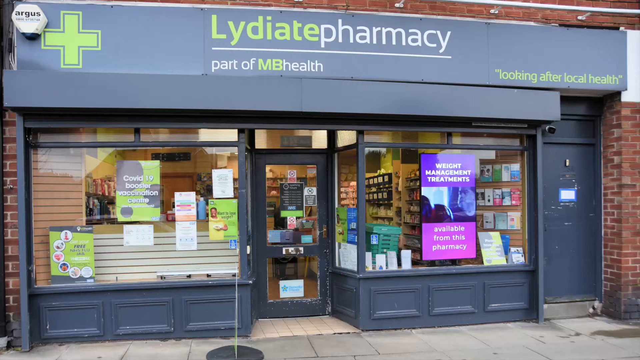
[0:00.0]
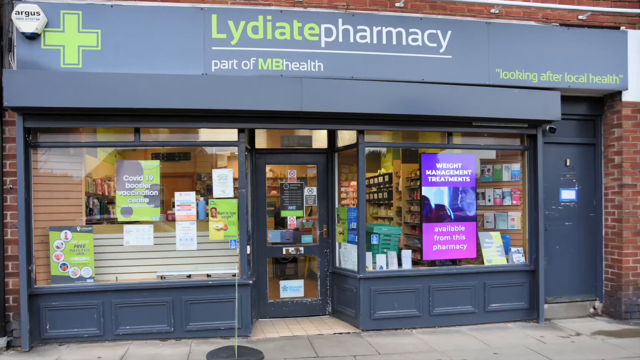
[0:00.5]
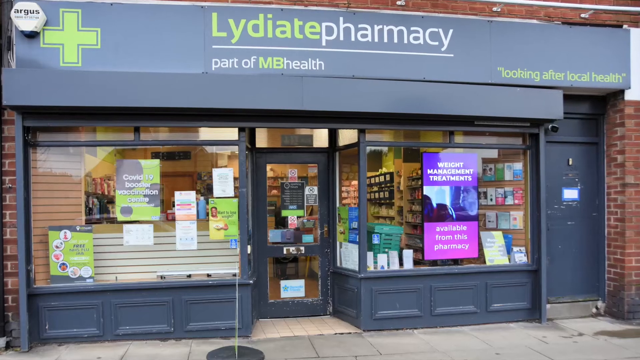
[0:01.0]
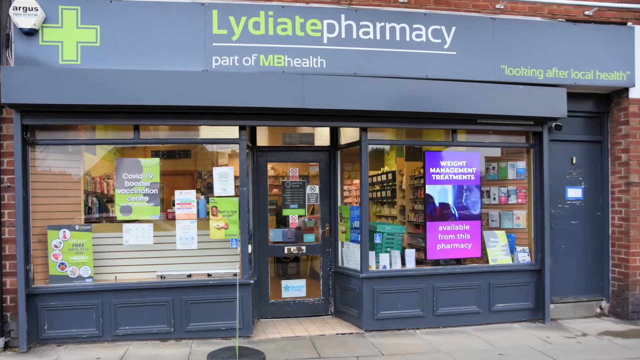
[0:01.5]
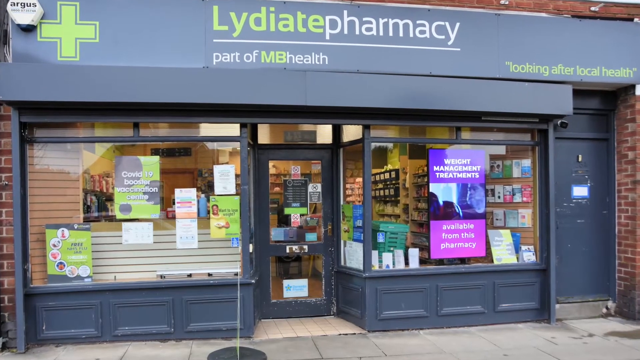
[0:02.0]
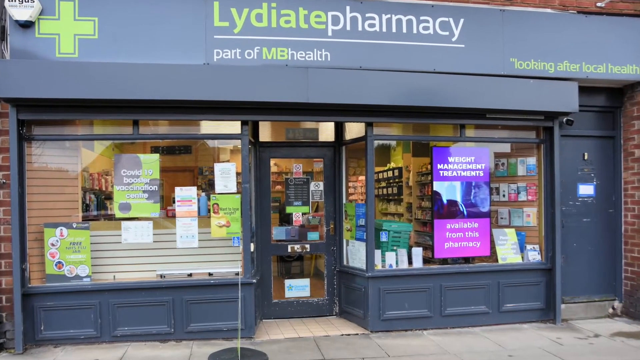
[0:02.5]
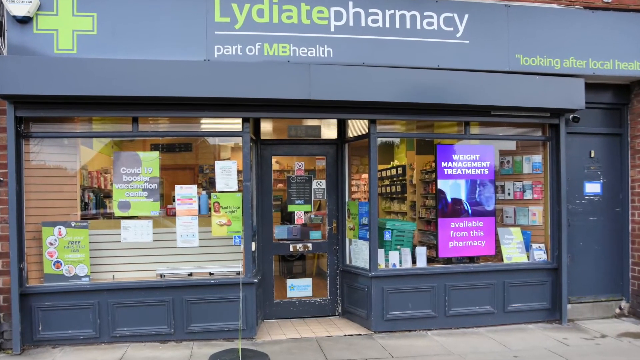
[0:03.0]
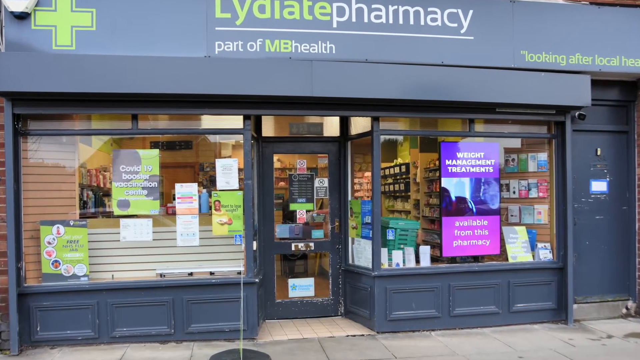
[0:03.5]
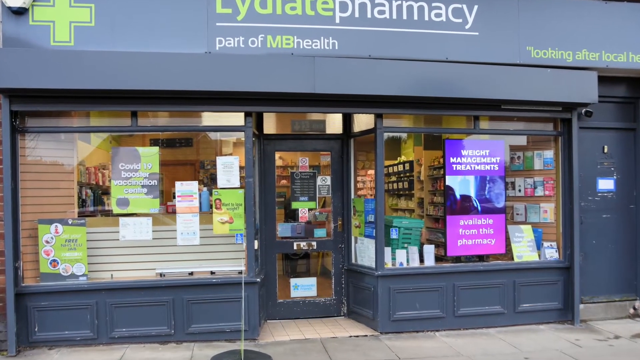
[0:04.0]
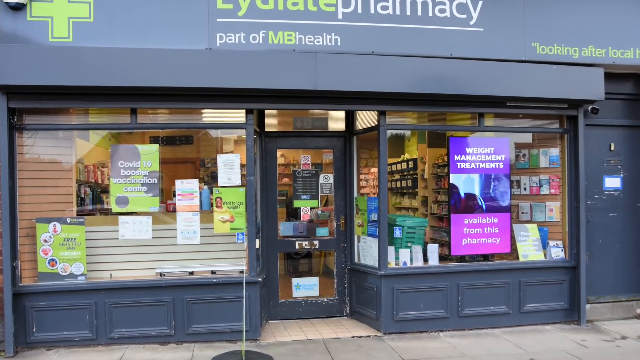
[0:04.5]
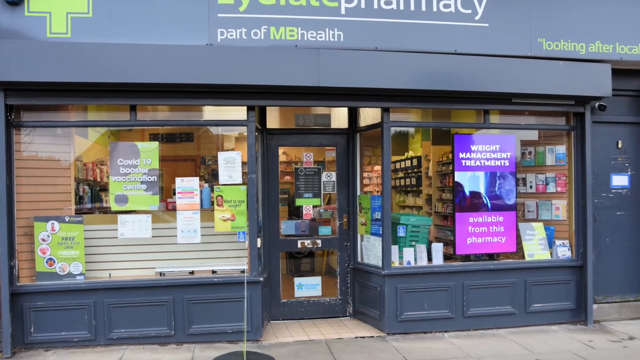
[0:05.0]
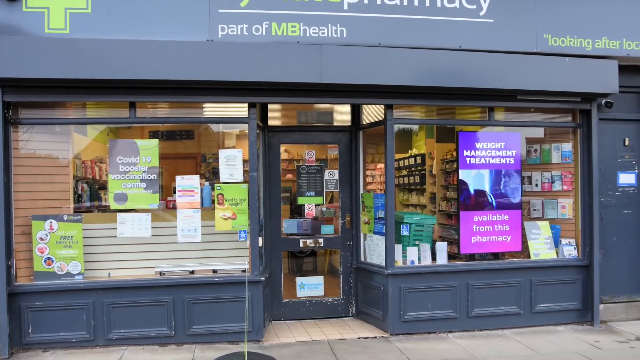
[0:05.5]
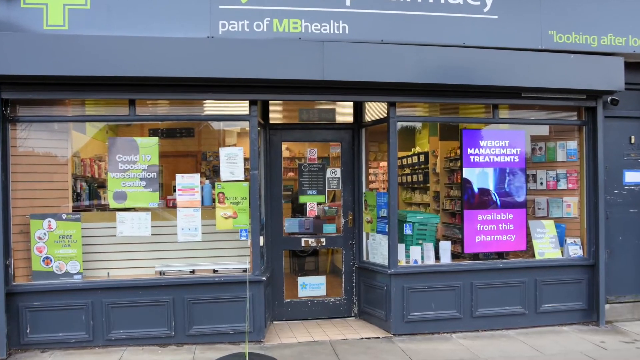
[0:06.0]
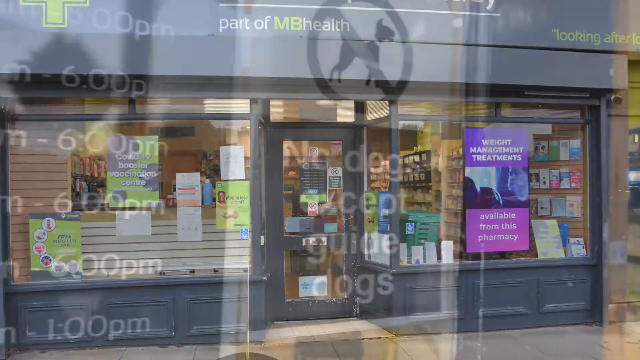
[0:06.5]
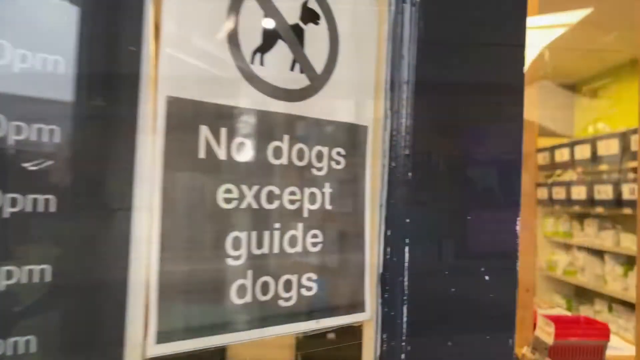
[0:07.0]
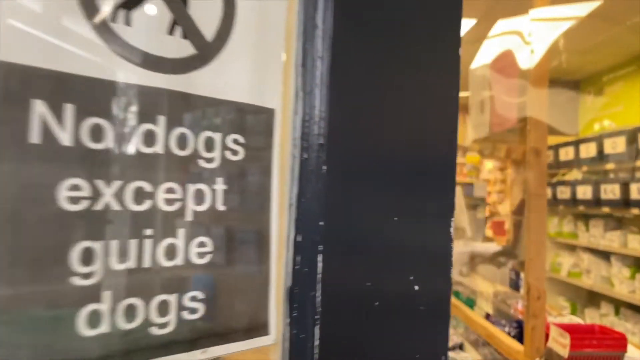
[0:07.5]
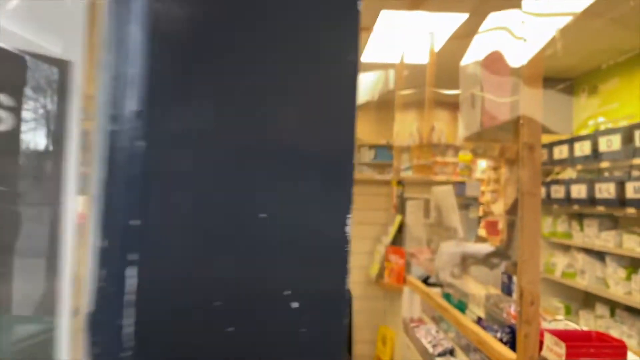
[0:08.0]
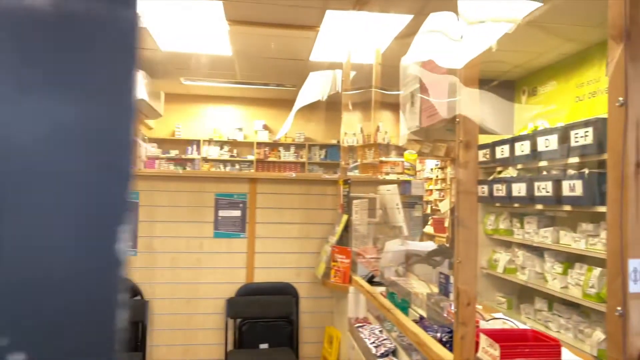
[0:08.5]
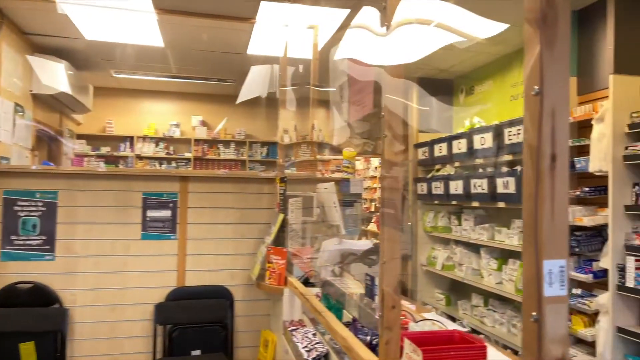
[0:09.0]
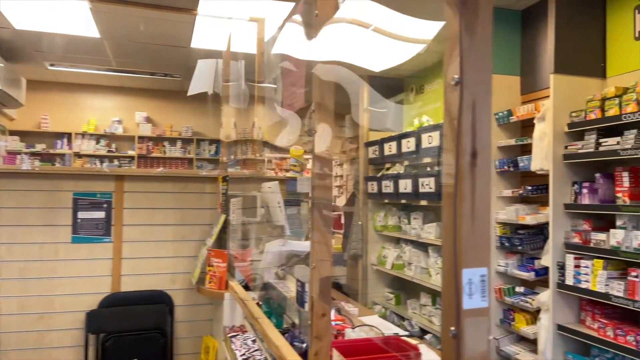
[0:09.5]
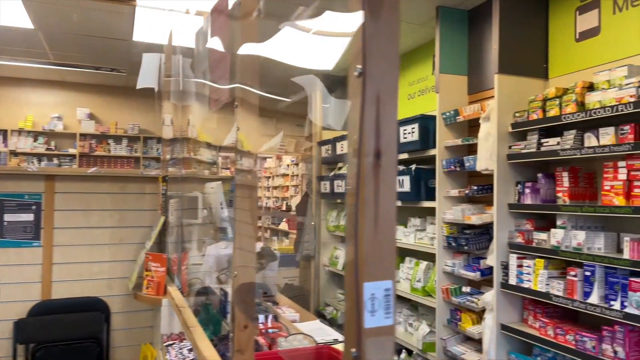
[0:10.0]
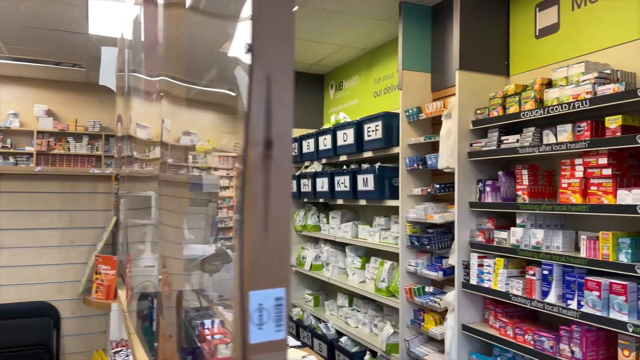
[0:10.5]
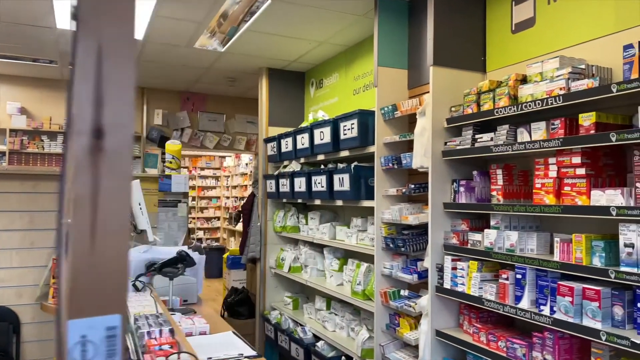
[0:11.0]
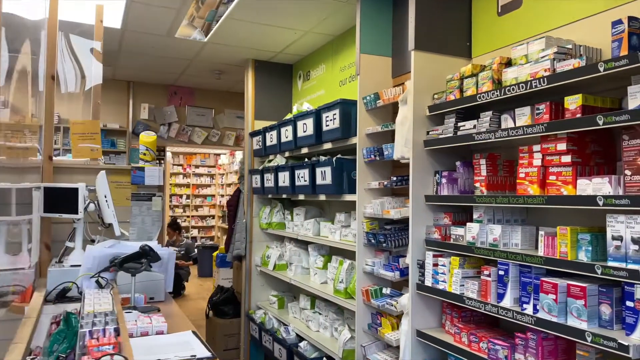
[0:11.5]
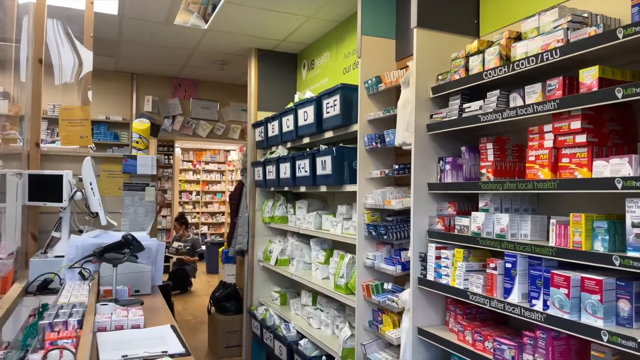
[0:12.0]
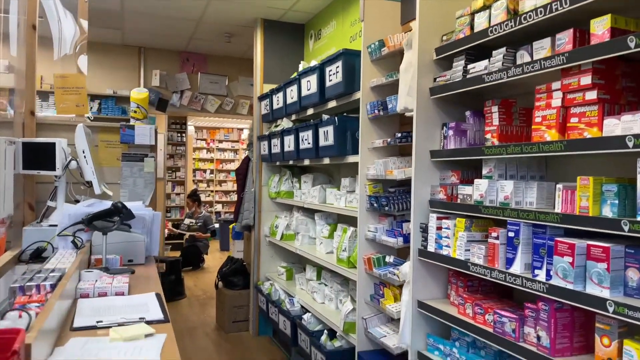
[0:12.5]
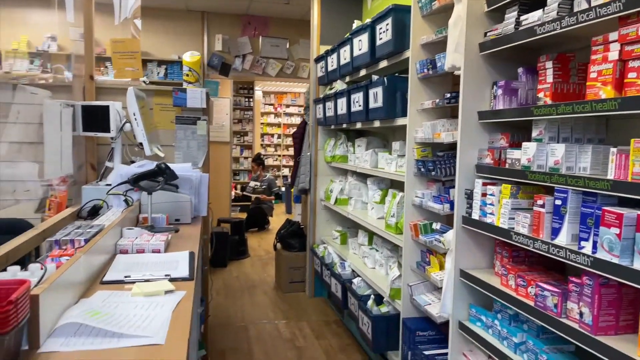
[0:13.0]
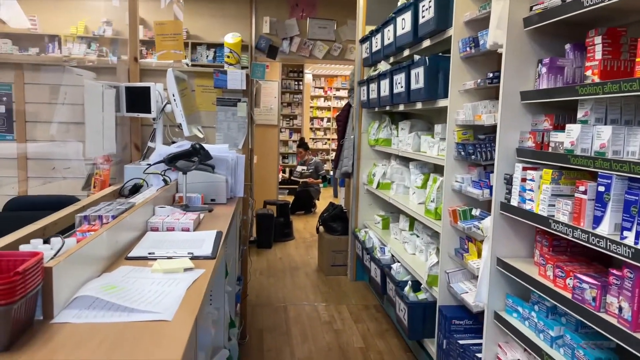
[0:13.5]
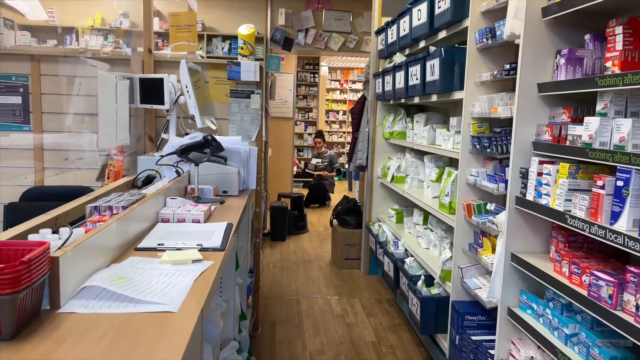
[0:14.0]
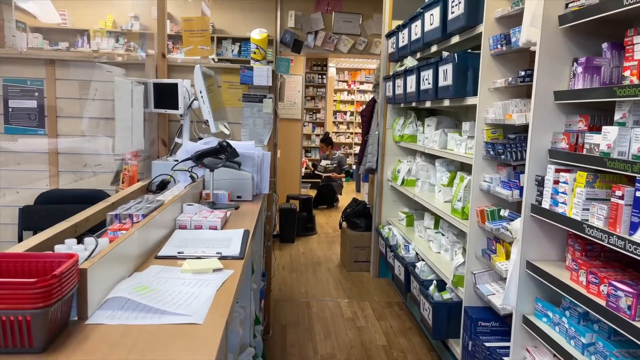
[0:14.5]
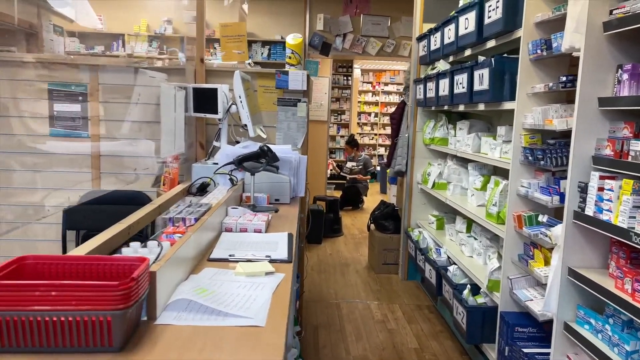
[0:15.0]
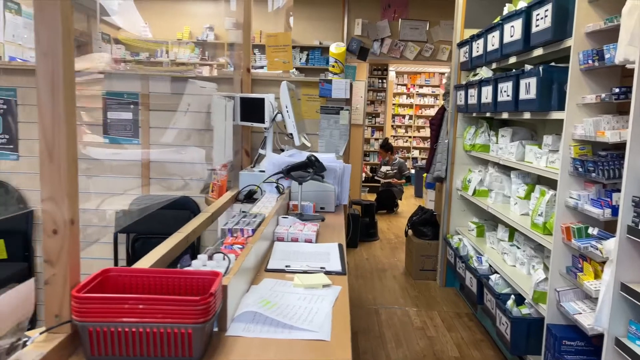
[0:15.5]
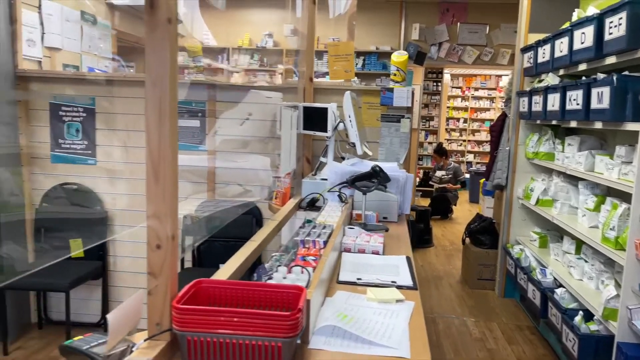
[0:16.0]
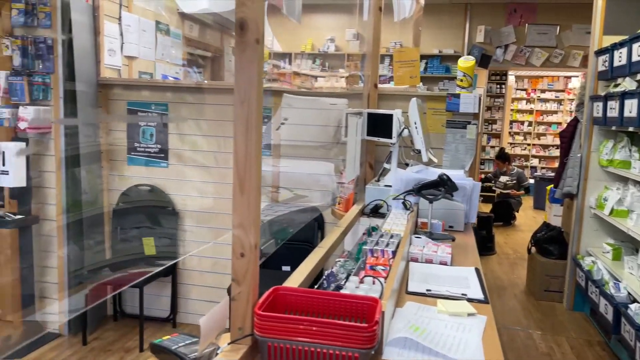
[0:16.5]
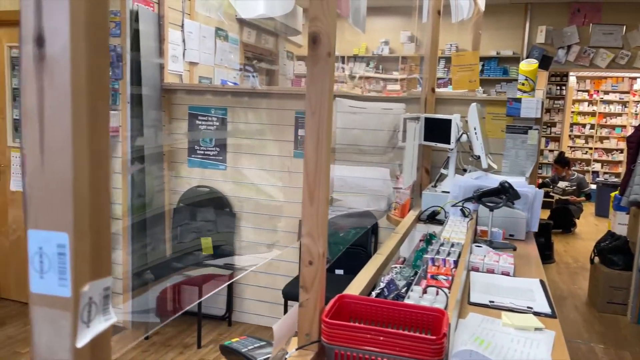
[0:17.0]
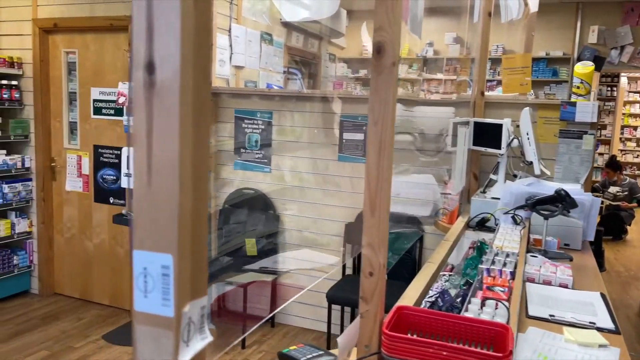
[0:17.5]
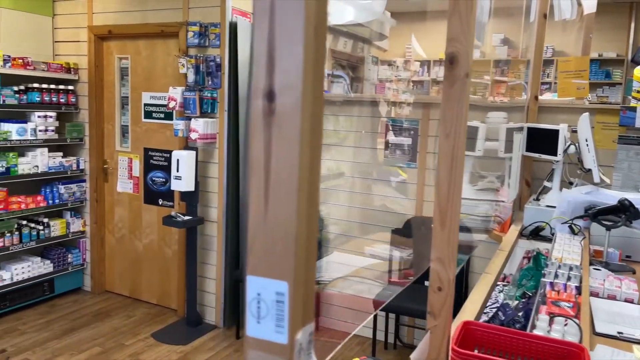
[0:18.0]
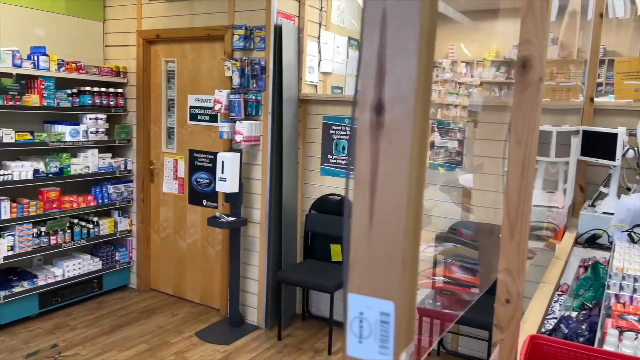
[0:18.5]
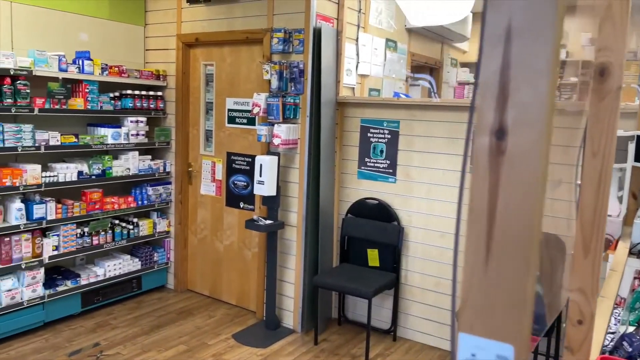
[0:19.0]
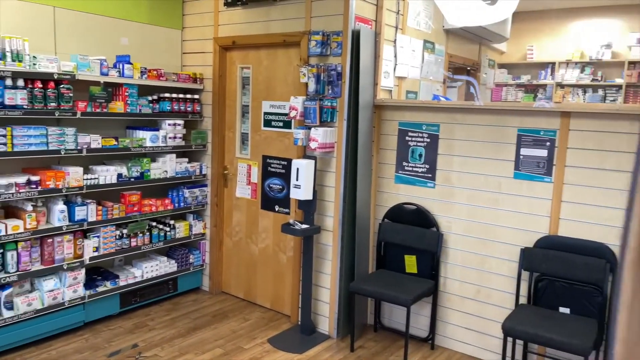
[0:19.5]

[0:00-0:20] The video opens on the outside storefront of a pharmacy, apparently in a city. The pharmacy is in a red brick building with a gray banner across the top that says "Lydiate pharmacy", with "Lydiate" in lime green and "pharmacy" in white. Underneath it says "part of MB health", and on the lower right it says "looking after local health". On the left is a green cross of the kind typically seen at a pharmacy. There are two big windows on either side of a glass door, with lots of colorful signs in the windows, possibly giving health information, and the pharmacy interior is visible through them. Then the view goes inside; as the door opens, it says "no dogs except guide dogs". The view moves through the pharmacy as if walking, showing typical shelves of medicines, then goes behind the counter to show the different medicines available. The camera pans to the front, where there is kind of a chair and a waiting area for prescriptions, and then shows various toiletries and other typical pharmacy items.